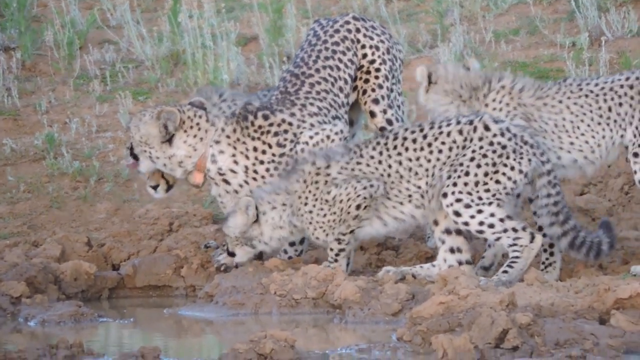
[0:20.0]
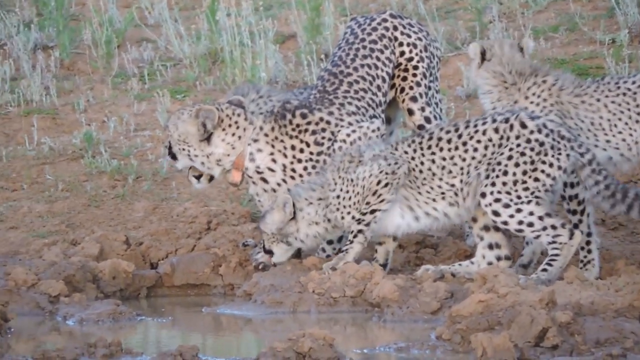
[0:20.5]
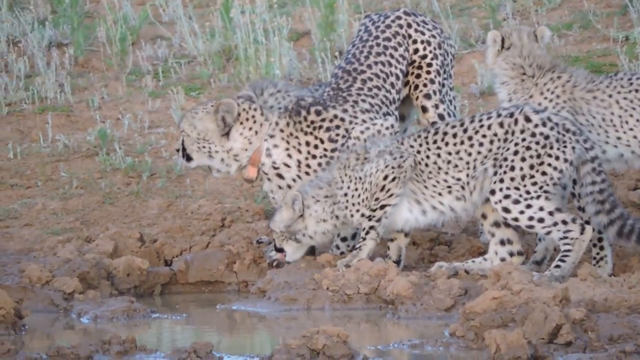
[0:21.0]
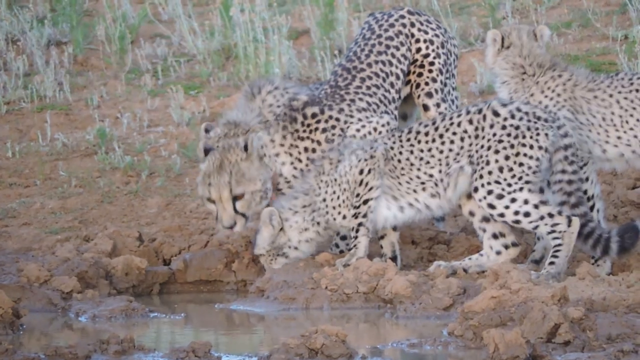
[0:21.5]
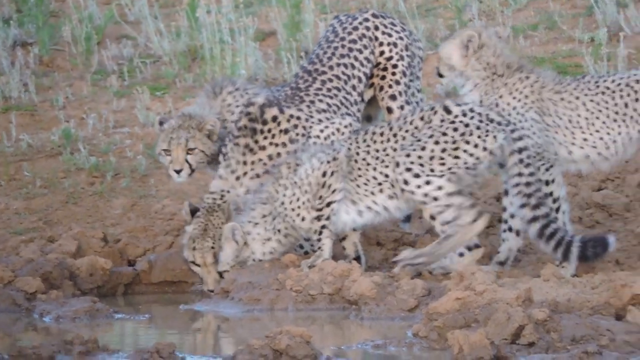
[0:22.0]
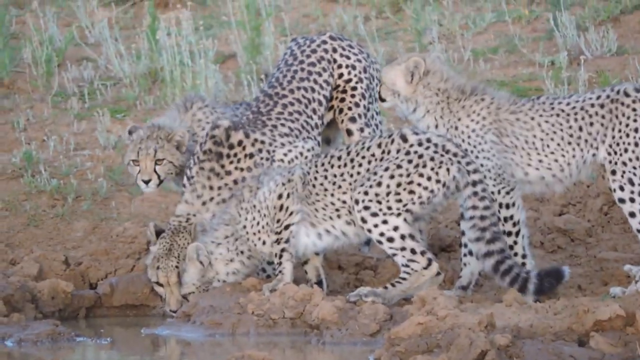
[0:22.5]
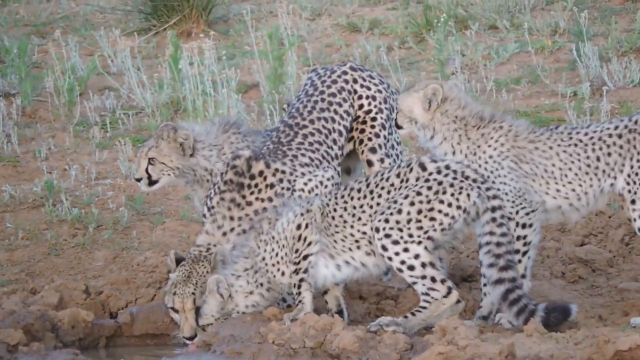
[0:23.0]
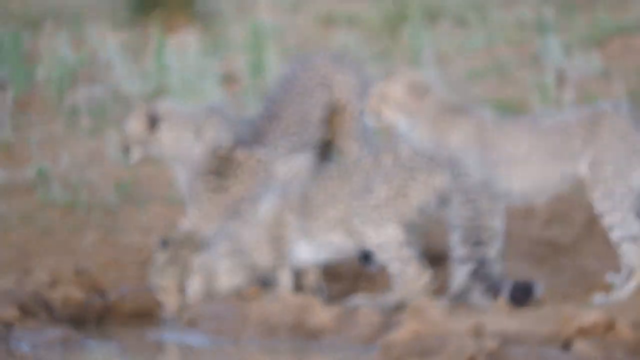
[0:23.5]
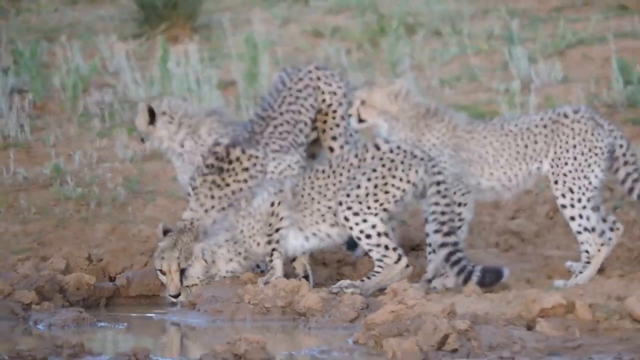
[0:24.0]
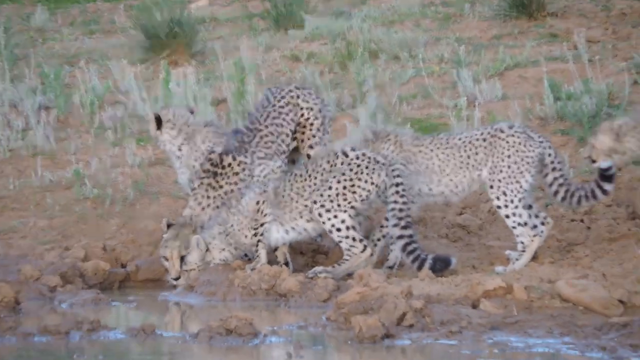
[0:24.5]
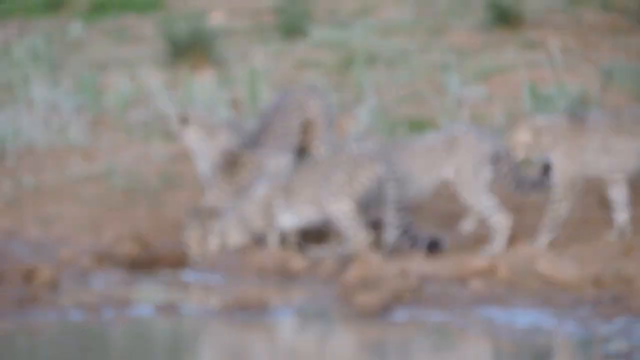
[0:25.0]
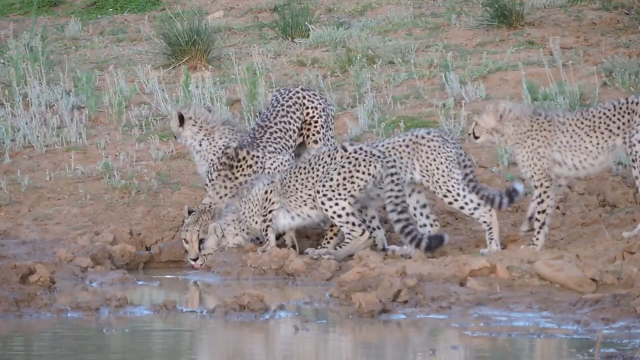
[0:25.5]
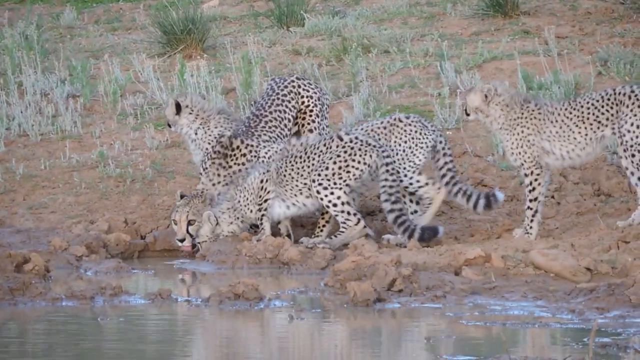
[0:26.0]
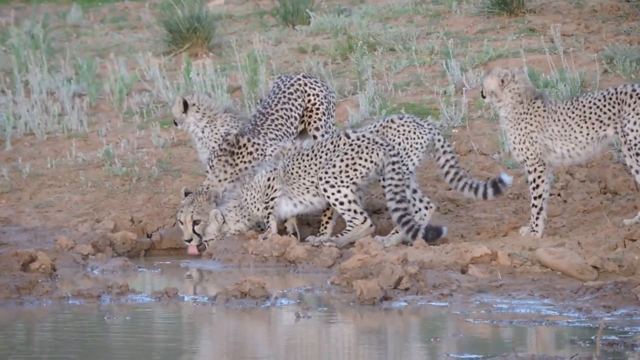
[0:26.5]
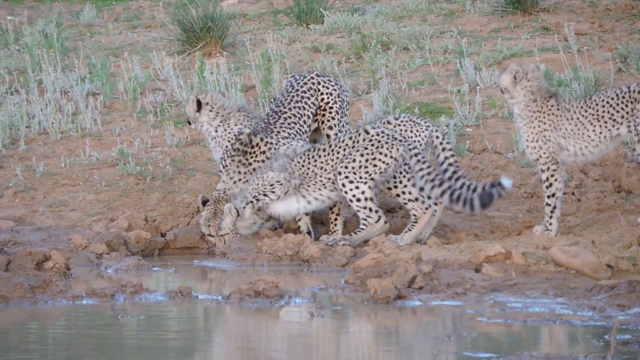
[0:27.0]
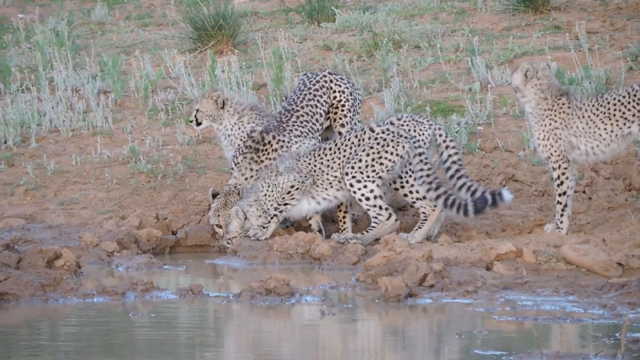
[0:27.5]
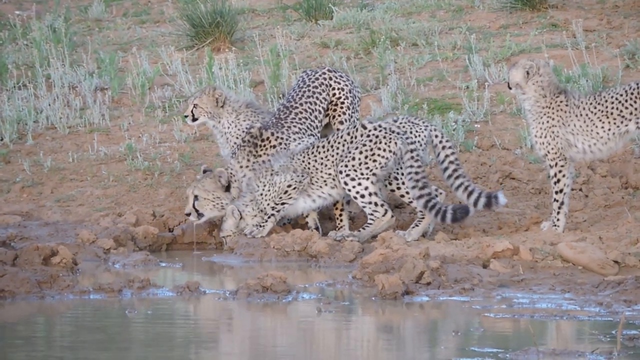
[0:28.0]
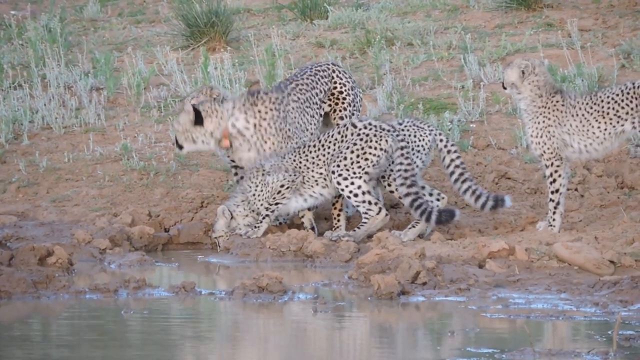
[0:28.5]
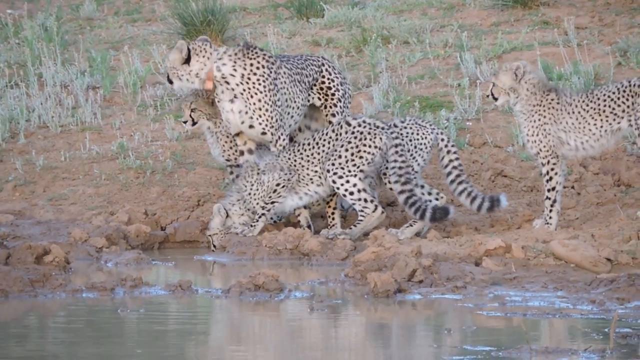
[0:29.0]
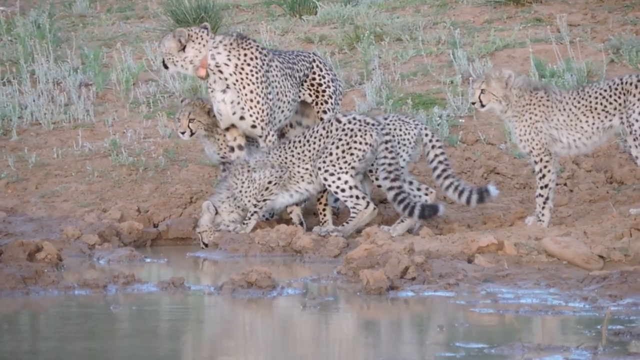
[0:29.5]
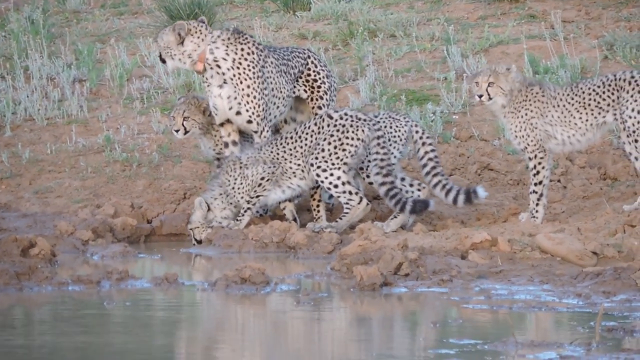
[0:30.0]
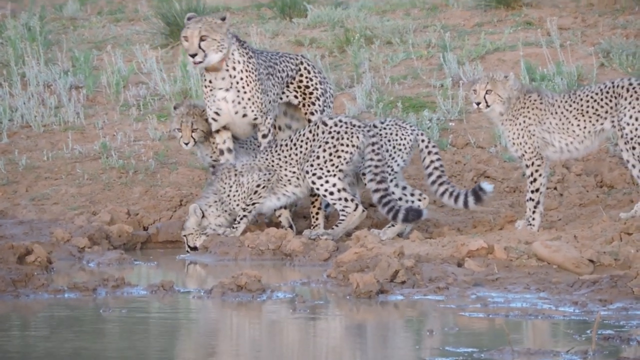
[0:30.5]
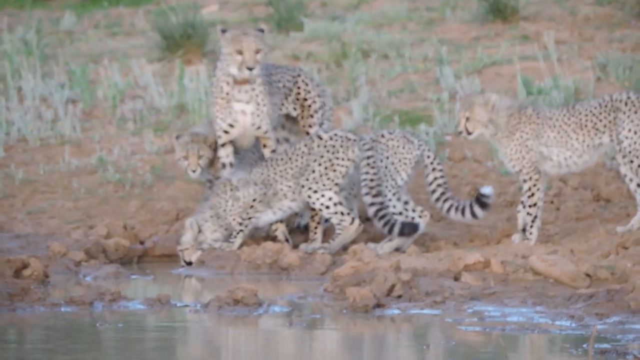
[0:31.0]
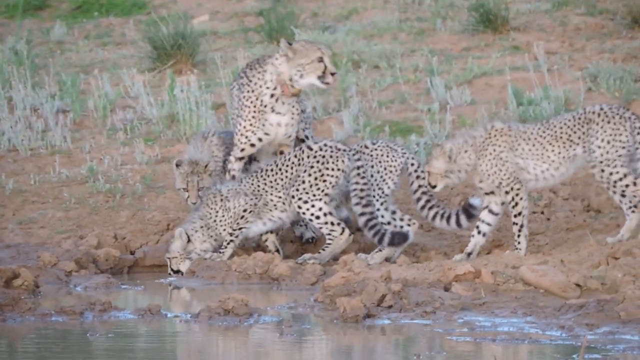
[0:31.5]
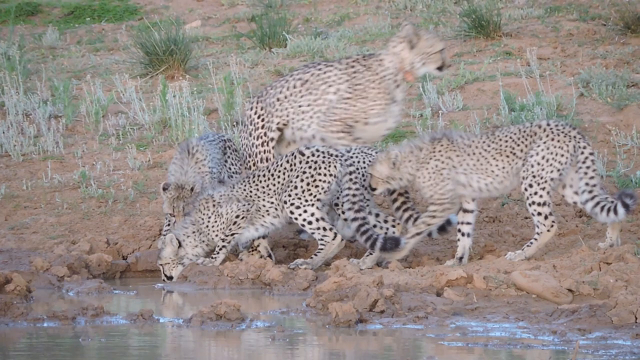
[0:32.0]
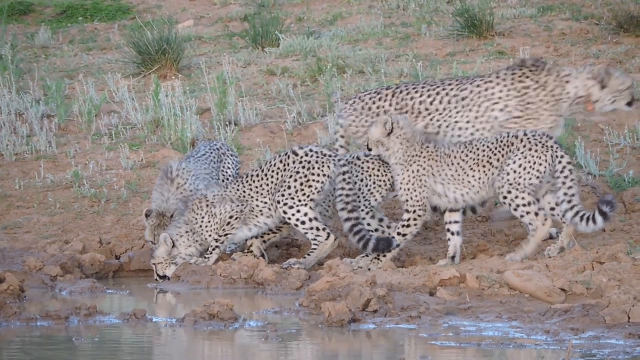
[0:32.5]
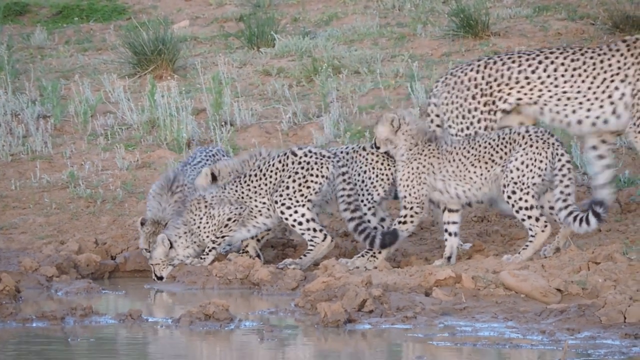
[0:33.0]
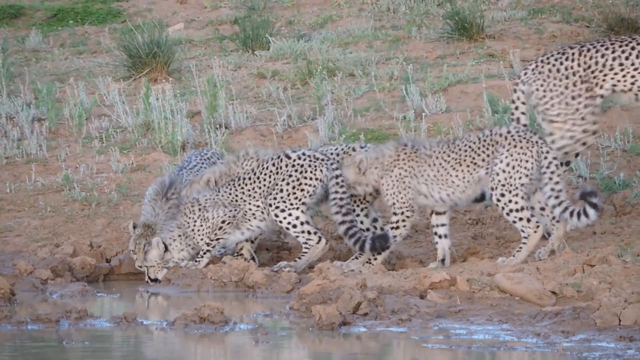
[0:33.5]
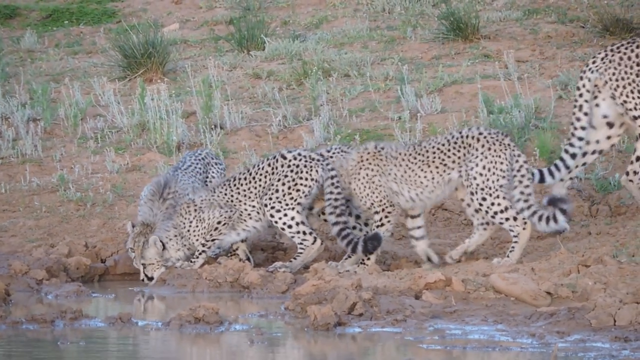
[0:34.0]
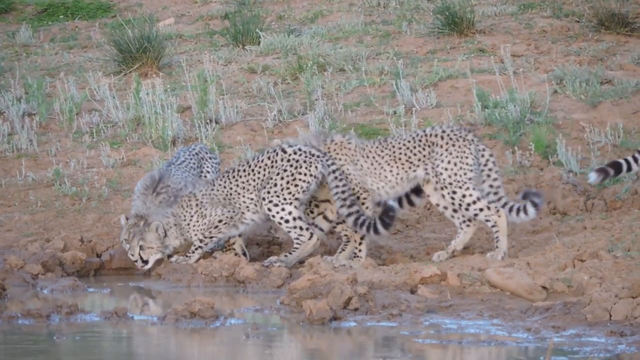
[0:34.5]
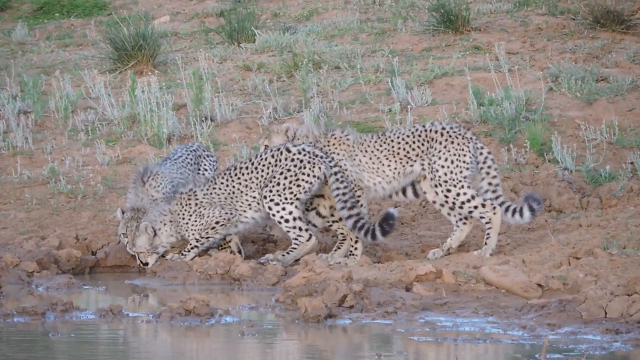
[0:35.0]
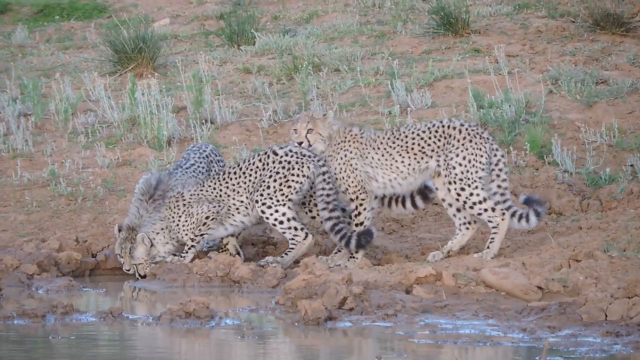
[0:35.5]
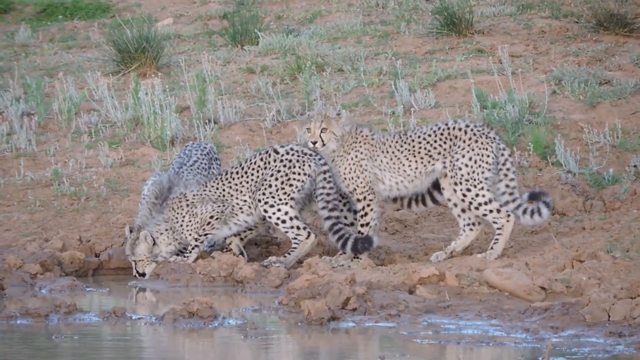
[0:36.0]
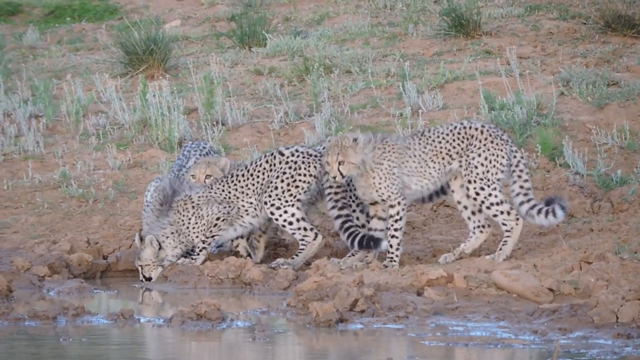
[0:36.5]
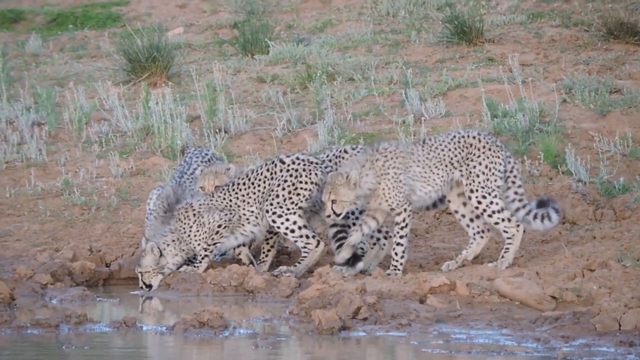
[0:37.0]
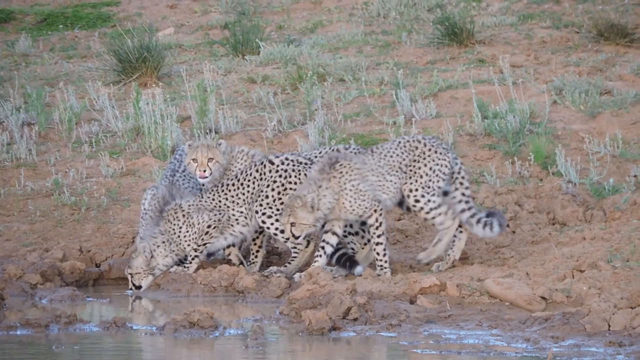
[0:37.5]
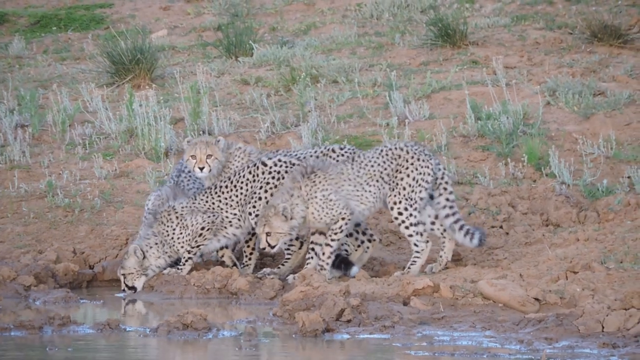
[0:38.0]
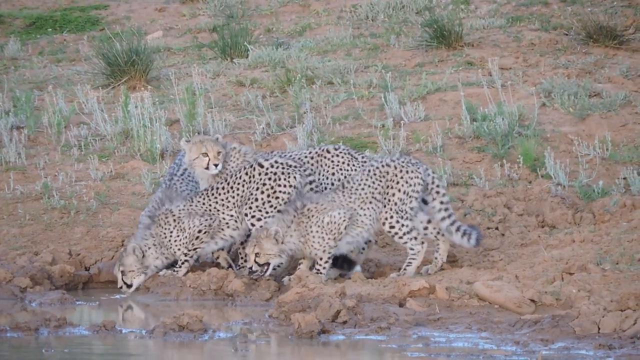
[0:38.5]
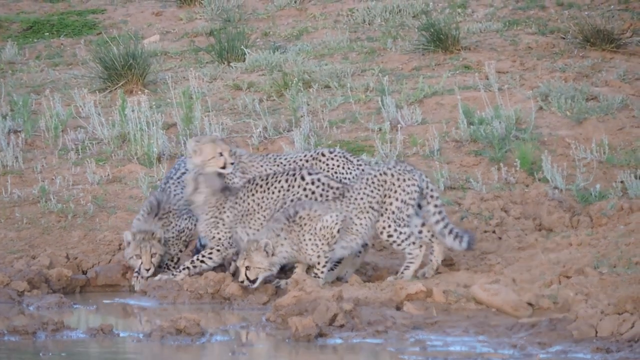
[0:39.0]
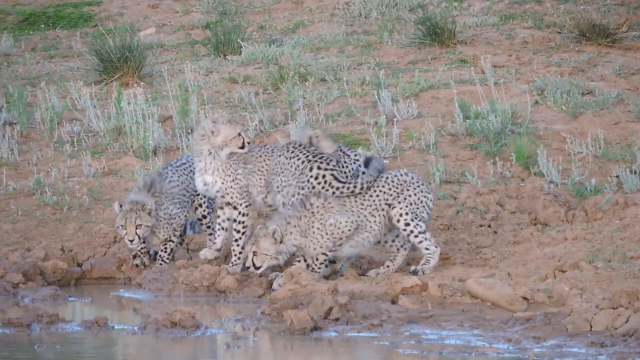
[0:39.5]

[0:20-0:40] The animals, apparently cheetahs or leopards, remain by the water. One is still coming in from the right side and looking towards its right, as is the one on the far left. Another one then arrives behind everyone, and all of them keep turning towards that side. Three of them are very small, and another one is small too. The one in the middle, which has something orange around its neck that seems to be a collar or some type of tracker, starts to walk towards the right side and walks away.